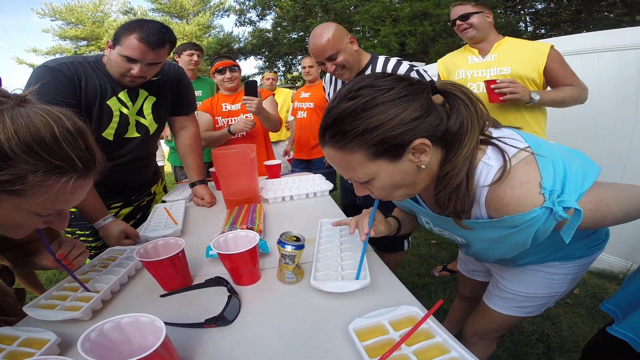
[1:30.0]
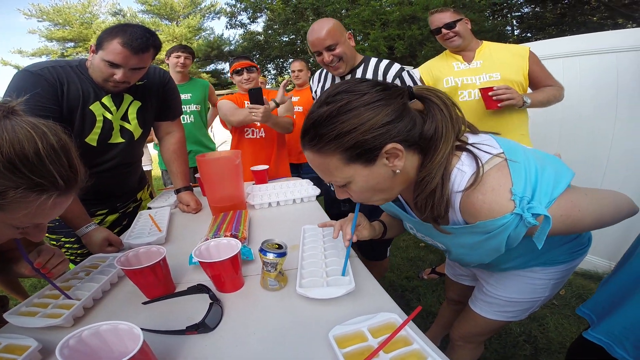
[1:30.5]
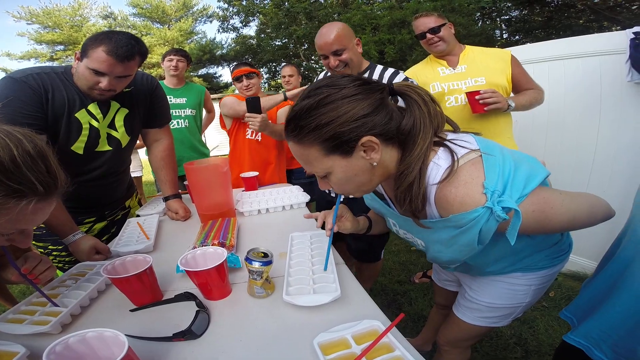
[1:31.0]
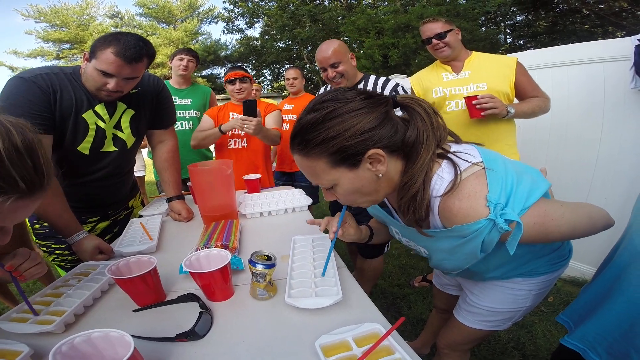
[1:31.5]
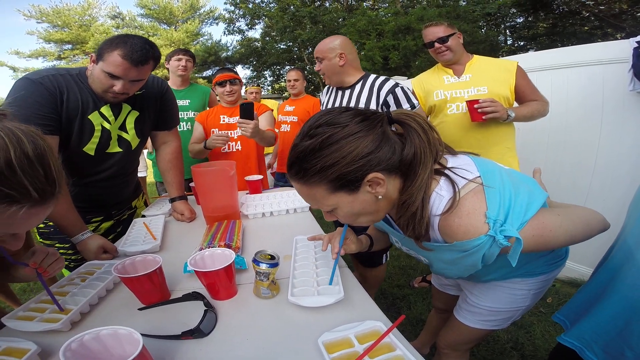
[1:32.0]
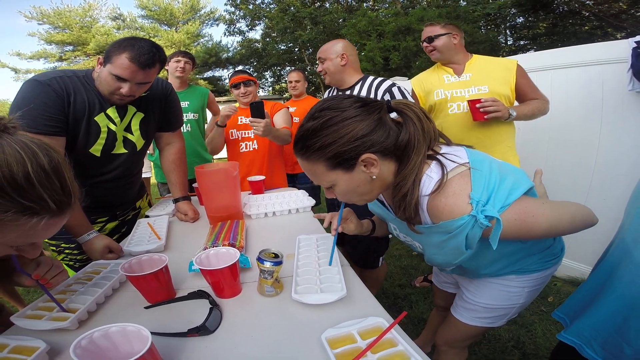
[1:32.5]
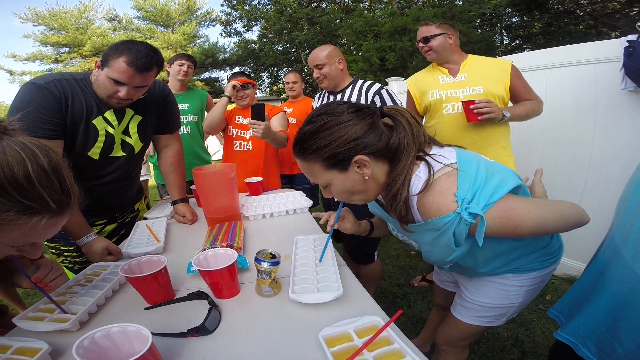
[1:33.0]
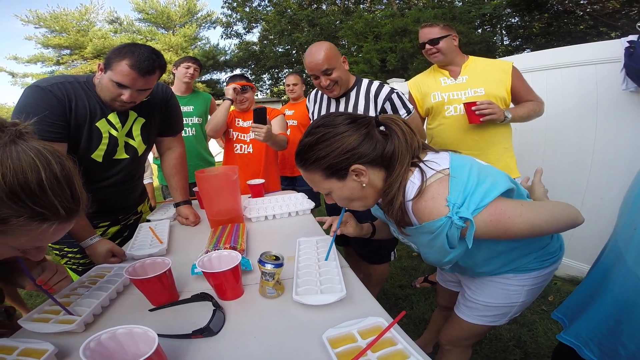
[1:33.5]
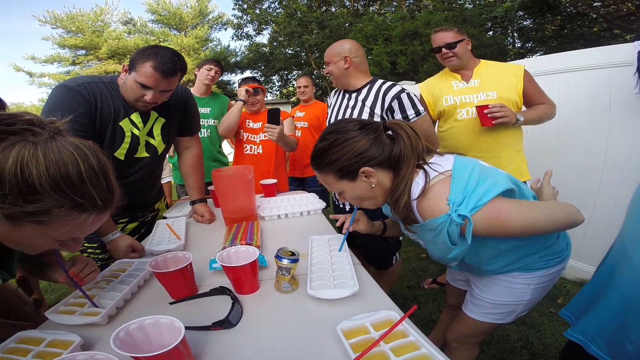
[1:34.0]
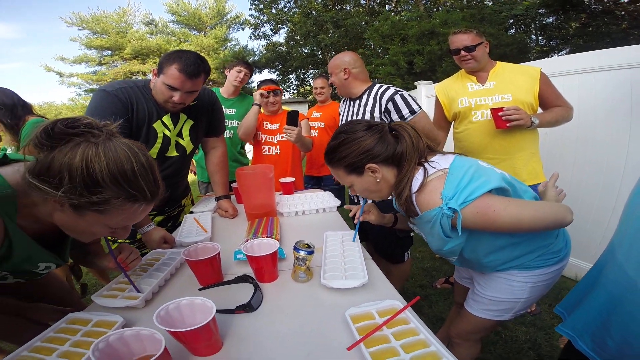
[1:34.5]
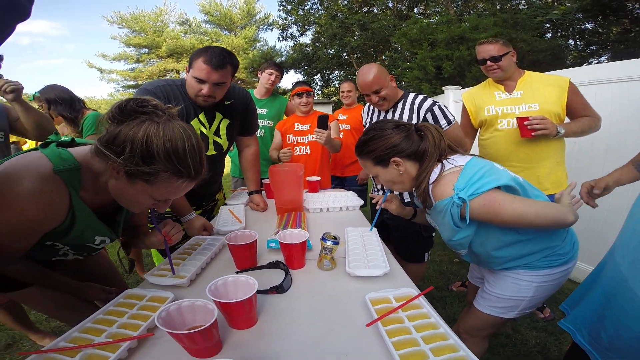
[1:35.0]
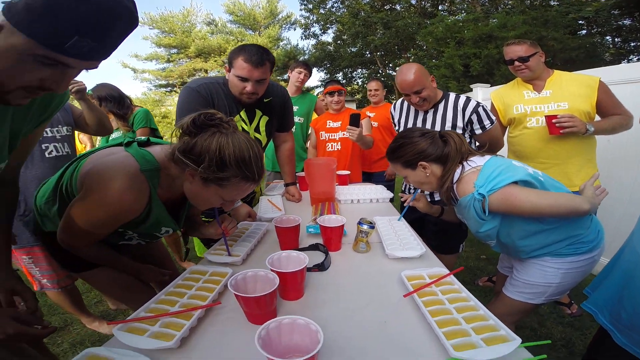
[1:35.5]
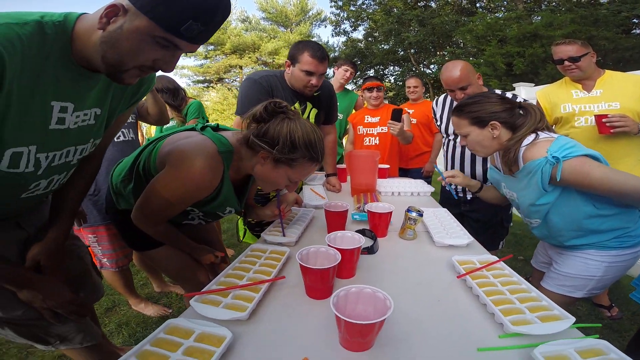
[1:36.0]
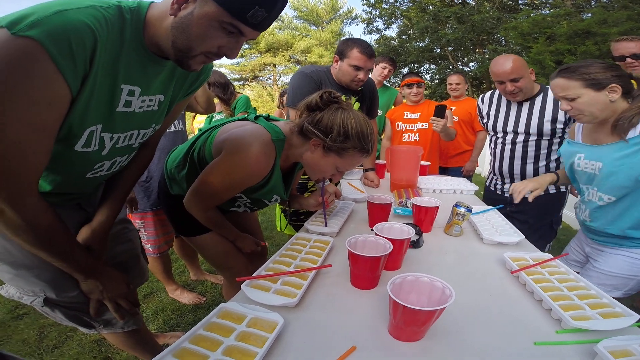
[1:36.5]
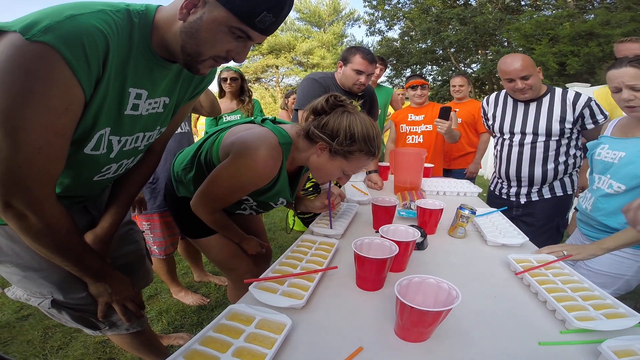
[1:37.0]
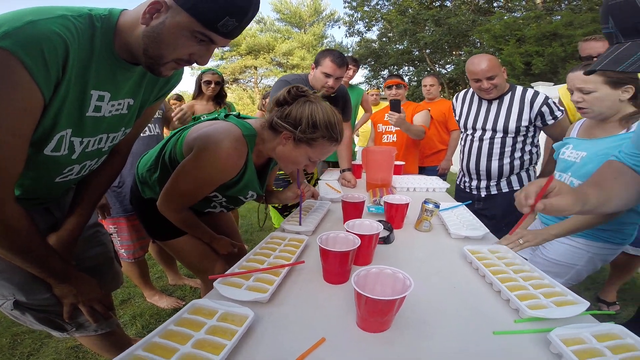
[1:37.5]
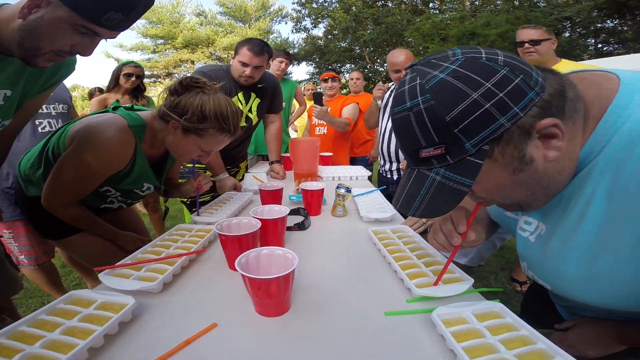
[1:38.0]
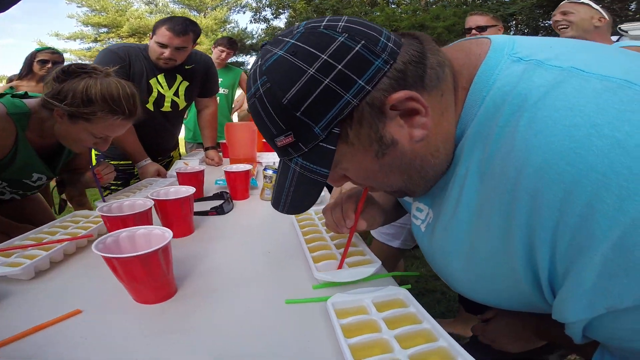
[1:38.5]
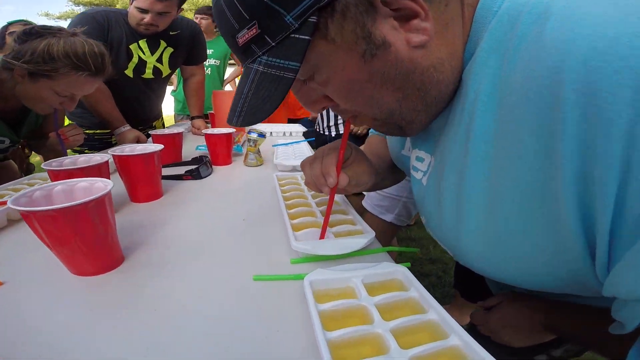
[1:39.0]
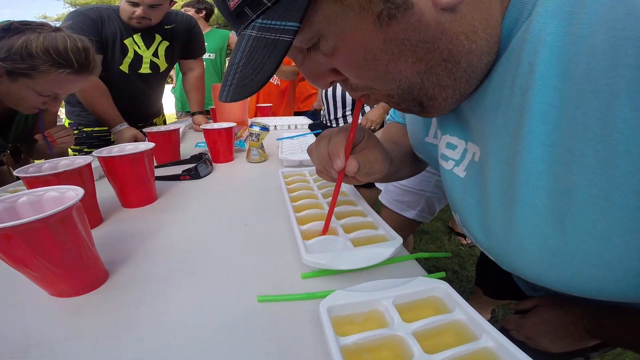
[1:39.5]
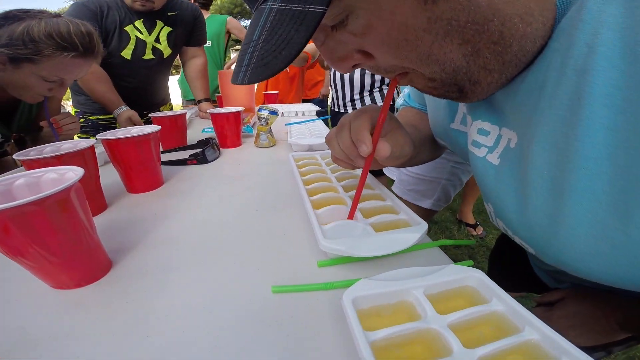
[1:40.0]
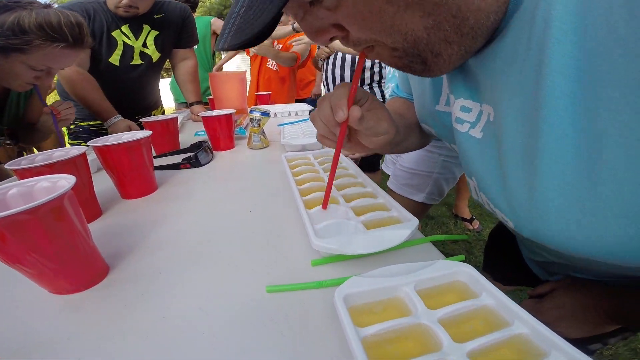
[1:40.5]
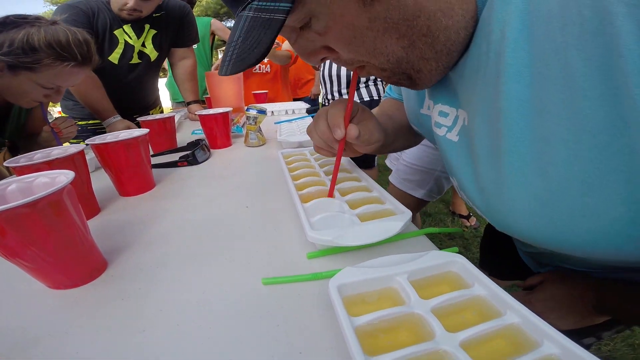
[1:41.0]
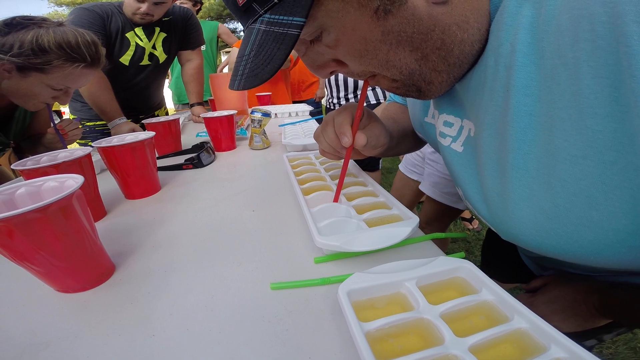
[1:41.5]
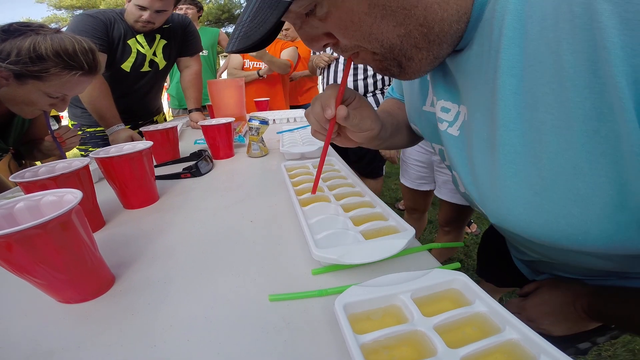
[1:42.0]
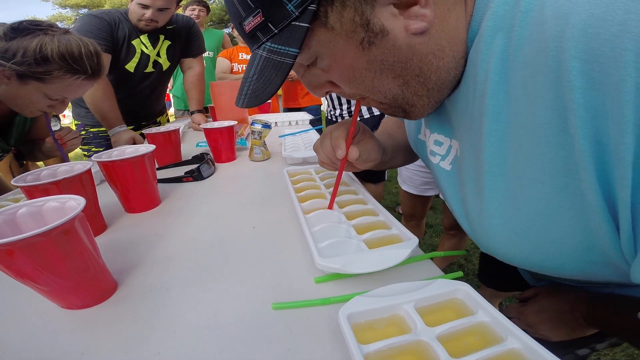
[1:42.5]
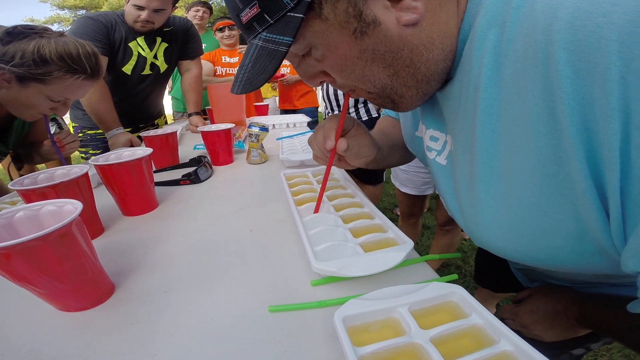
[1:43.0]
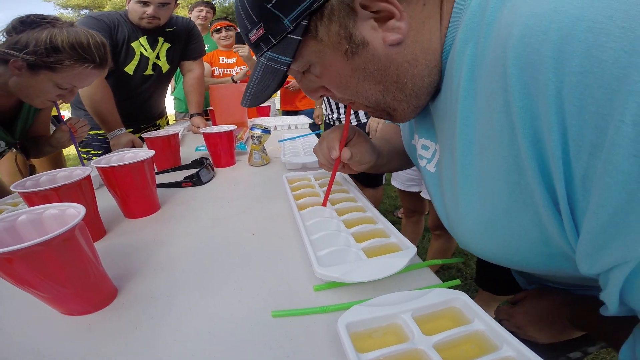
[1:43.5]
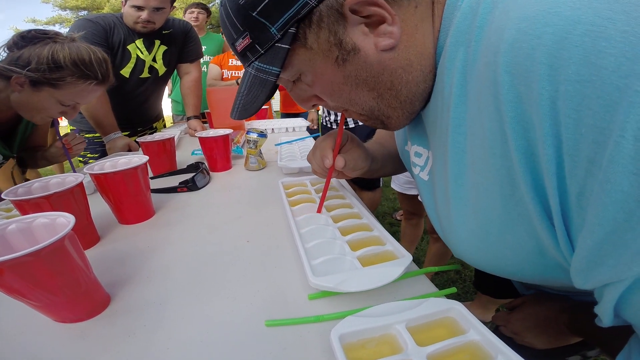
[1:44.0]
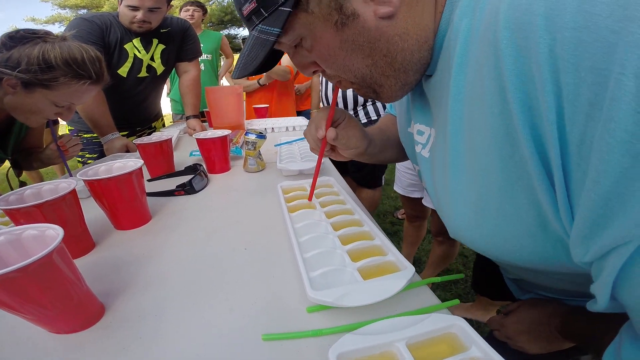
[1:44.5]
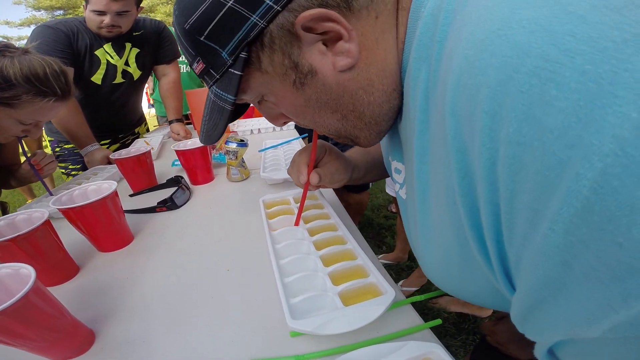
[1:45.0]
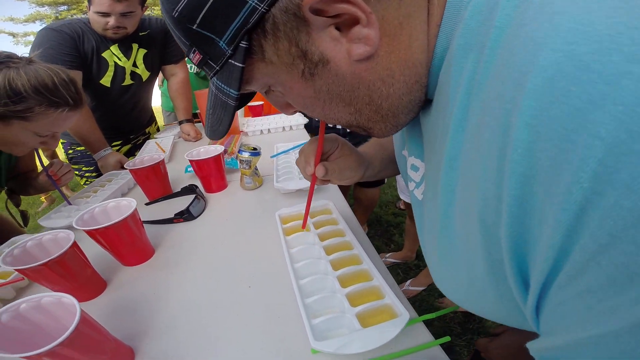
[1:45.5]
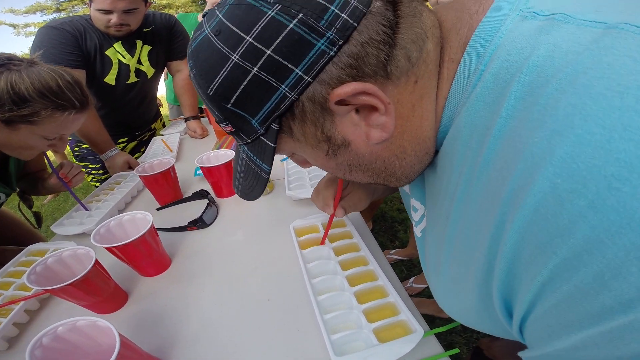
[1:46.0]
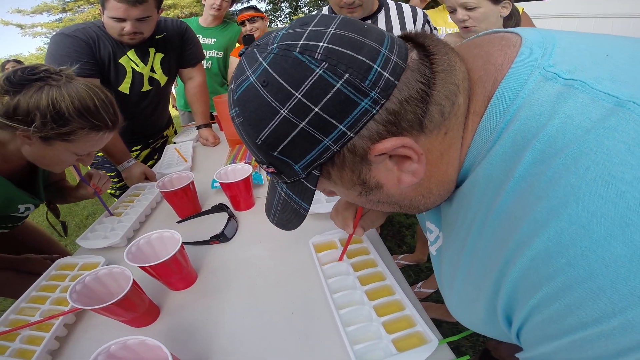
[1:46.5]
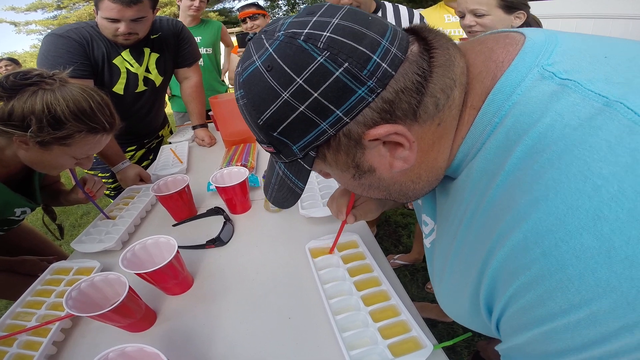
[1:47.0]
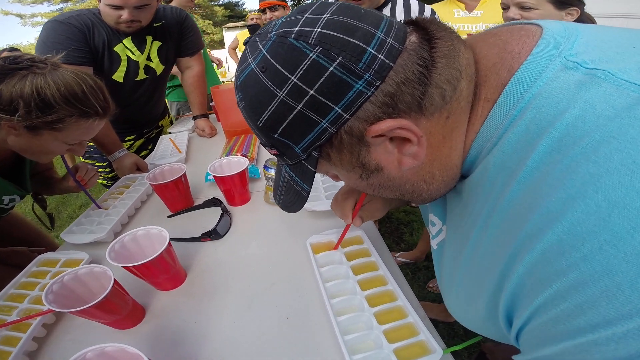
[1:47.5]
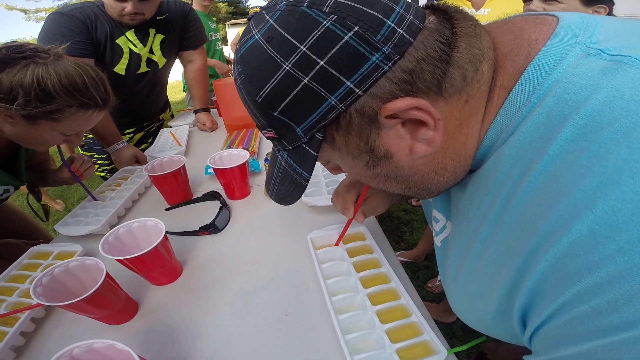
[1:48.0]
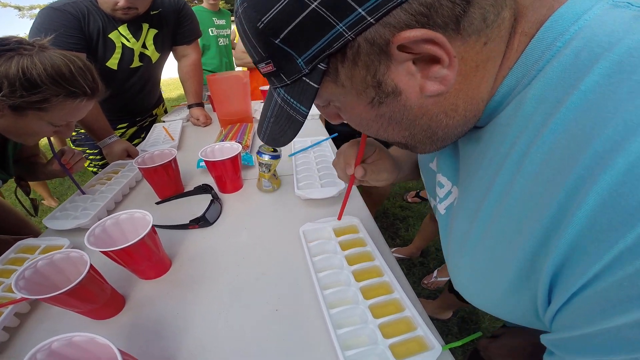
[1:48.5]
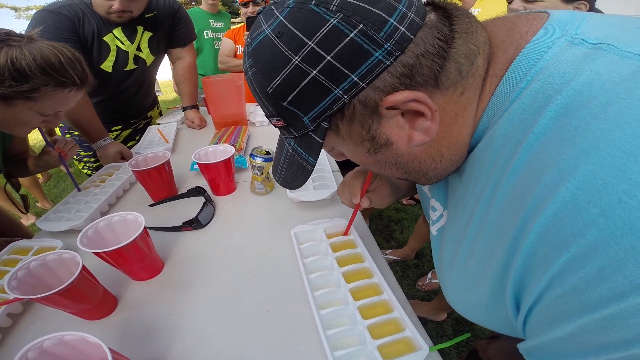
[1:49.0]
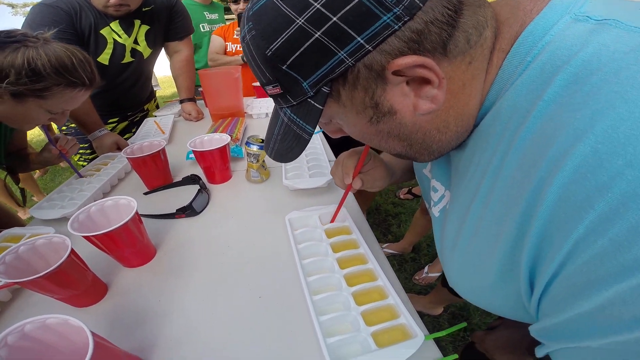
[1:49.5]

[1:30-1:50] The camera shifts to the right side, where apparently the fourth competitor on the light blue team takes over: a very heavyset man in a kind of baseball cap with a sort of almost tartan pattern, dark colored with lines cross-hatched across it. With a red straw, he starts on the top left row of his ice cube tray, soaking up the green liquid one section at a time, and seems to go very fast. All the ice cube trays lie lengthwise, horizontal relative to the competitors. On the left side of the image, the woman on the green team is still finishing up, and her team is almost a full tray behind, so the light blue team is winning easily. Competitors from other teams in different colored shirts are around the background, along with the referee and the guy in the New York Yankees jersey in the upper left. Beneath the table, people's footwear is visible: sandals and other casual shoes. Next to the woman on the green team, a man is ready to take over as that team's next competitor.